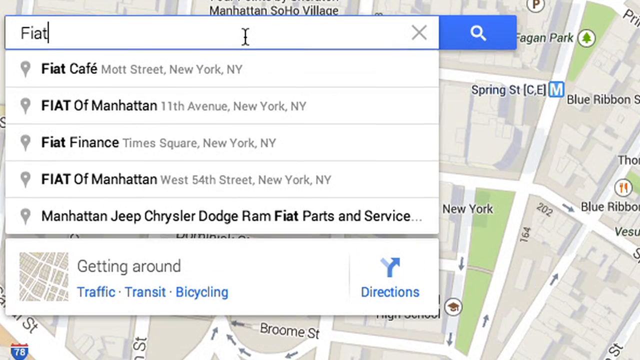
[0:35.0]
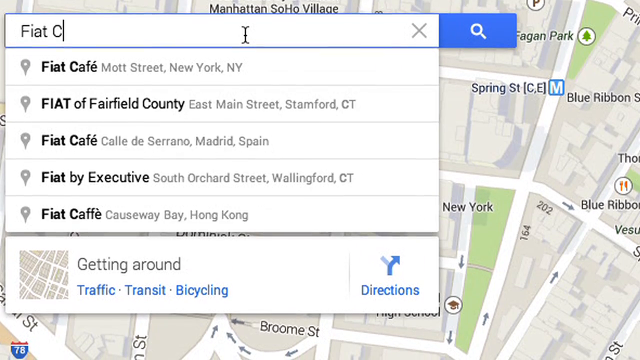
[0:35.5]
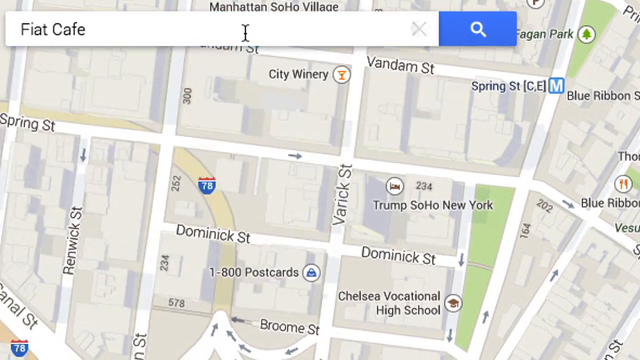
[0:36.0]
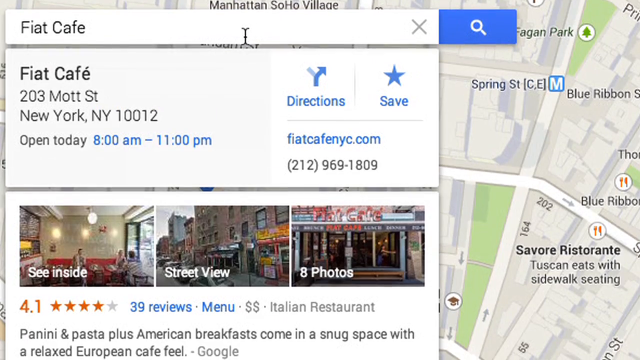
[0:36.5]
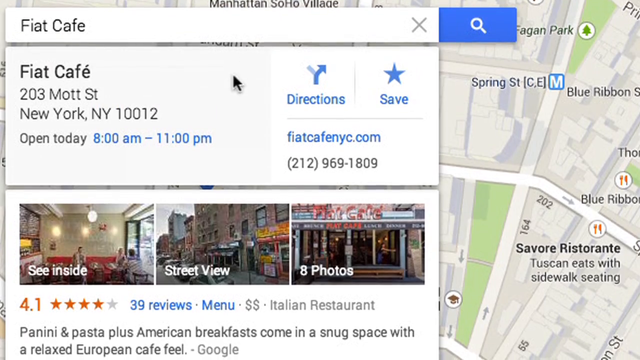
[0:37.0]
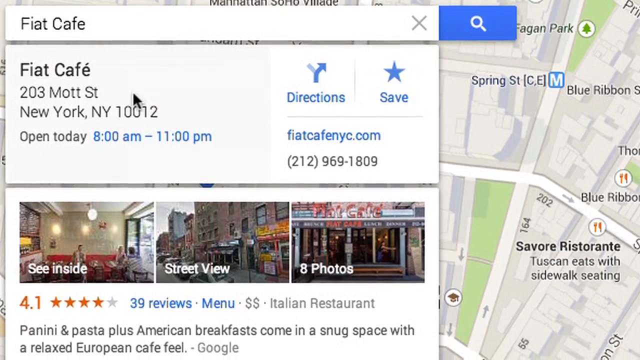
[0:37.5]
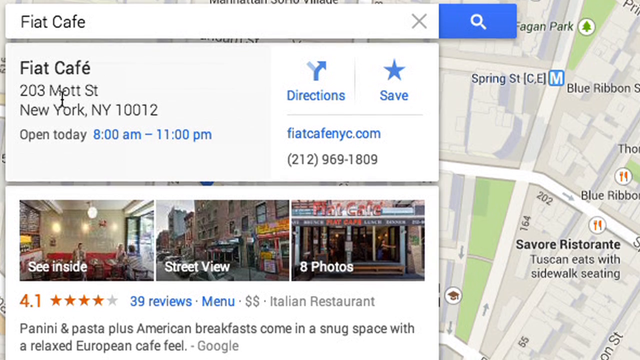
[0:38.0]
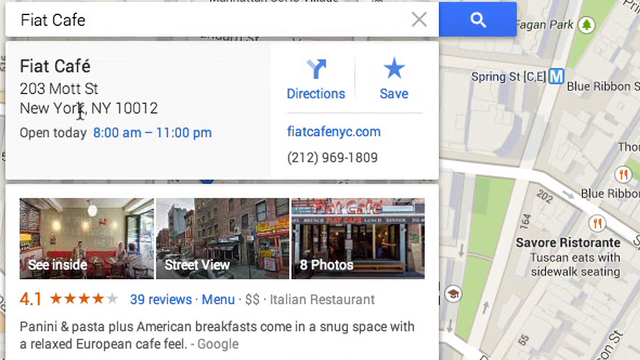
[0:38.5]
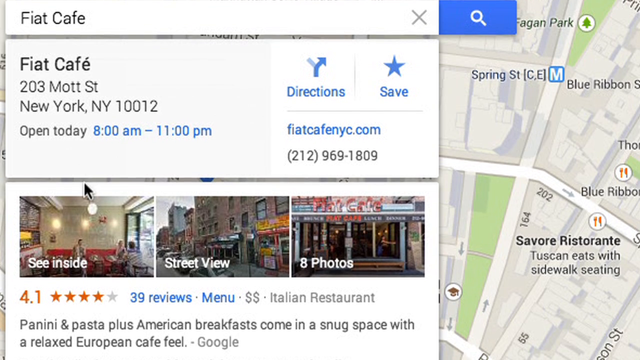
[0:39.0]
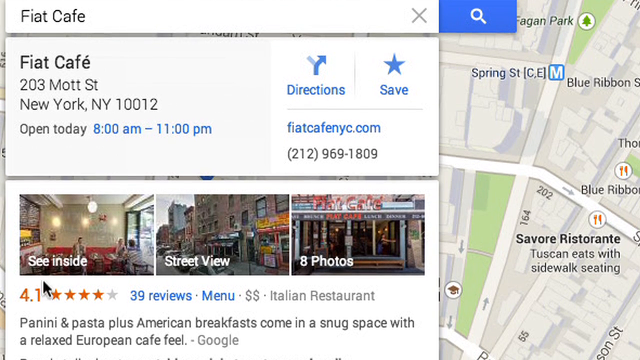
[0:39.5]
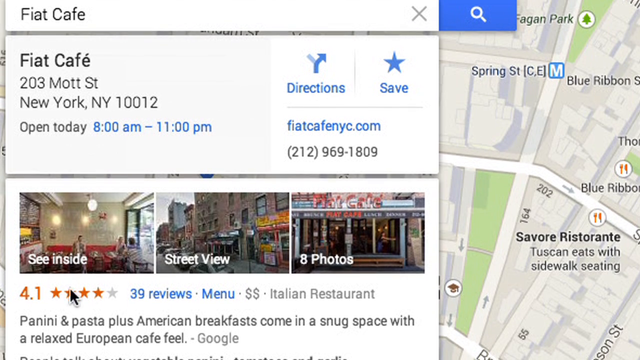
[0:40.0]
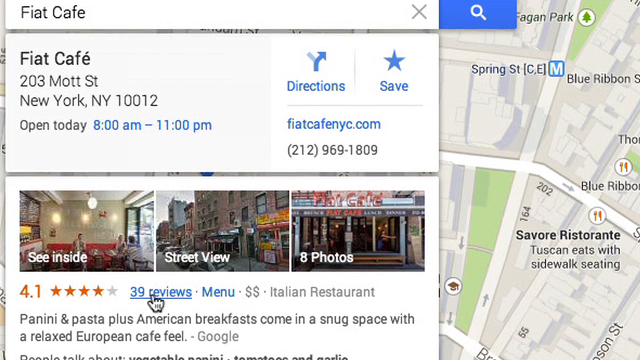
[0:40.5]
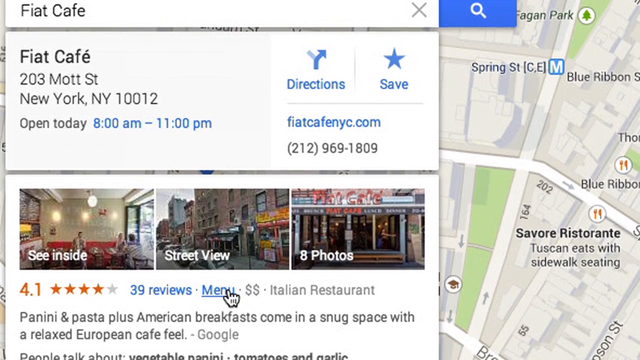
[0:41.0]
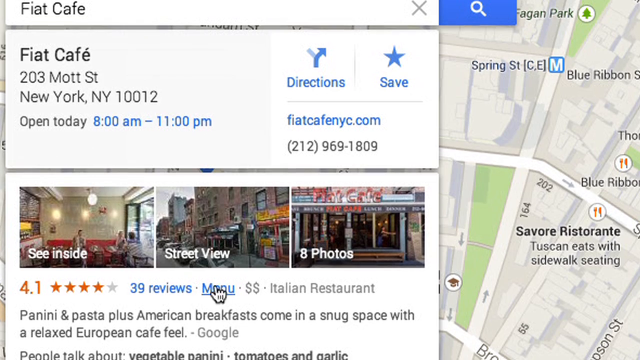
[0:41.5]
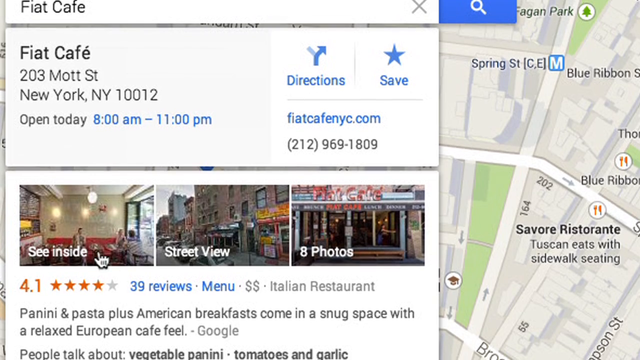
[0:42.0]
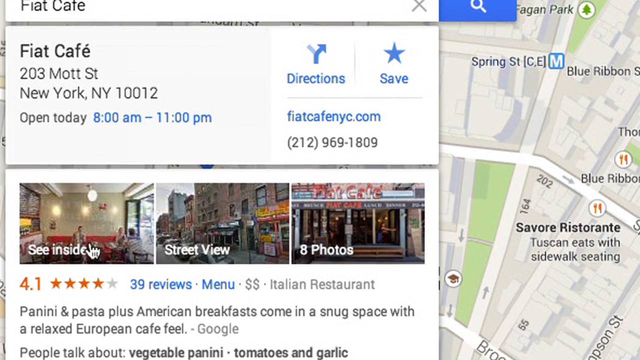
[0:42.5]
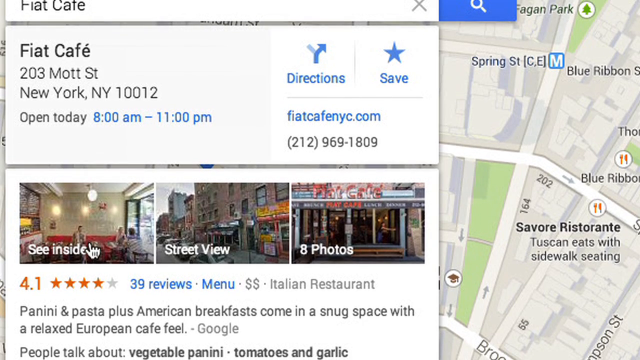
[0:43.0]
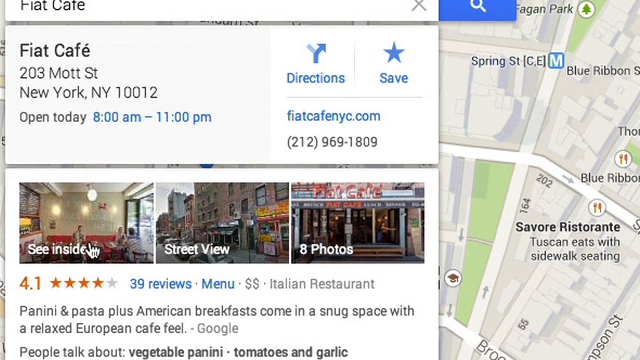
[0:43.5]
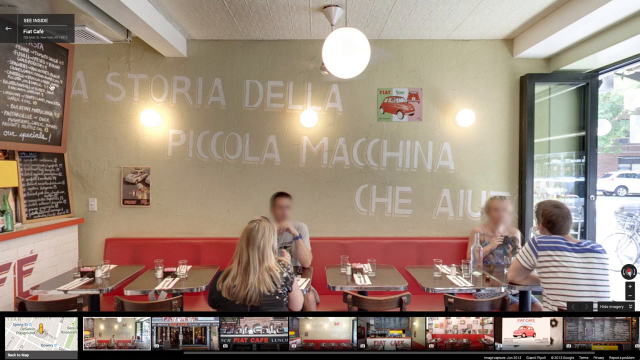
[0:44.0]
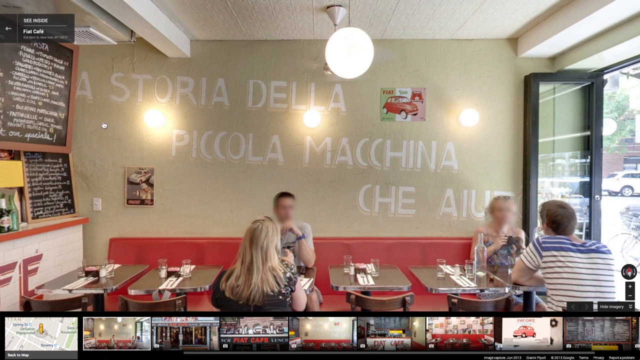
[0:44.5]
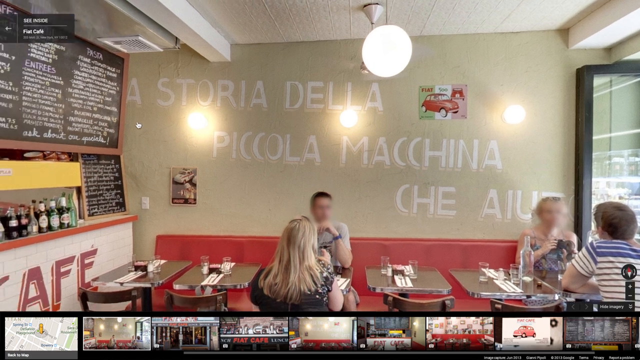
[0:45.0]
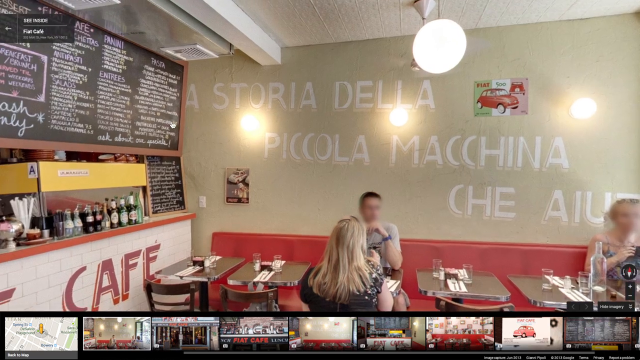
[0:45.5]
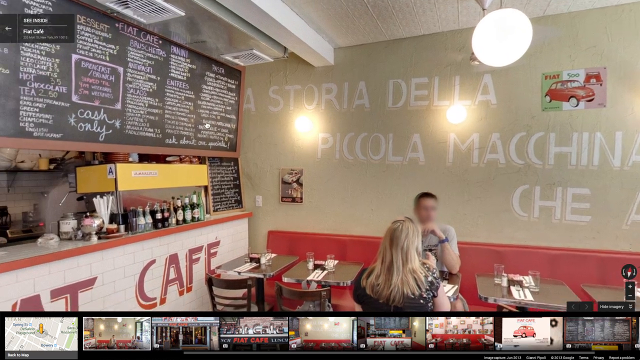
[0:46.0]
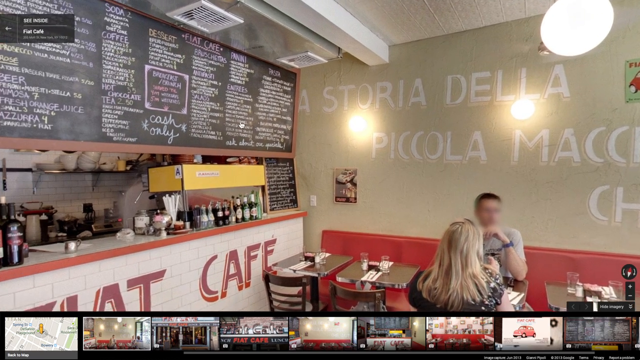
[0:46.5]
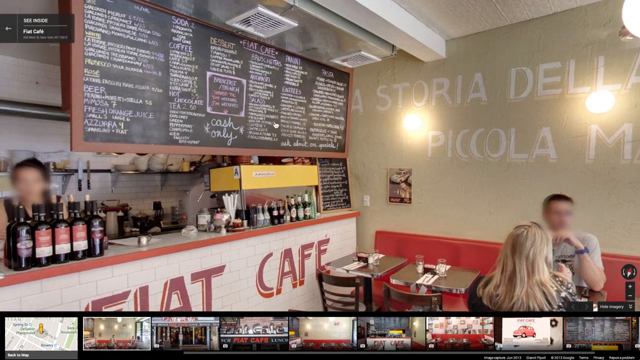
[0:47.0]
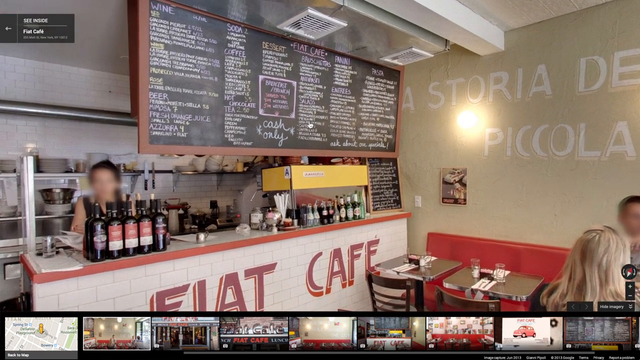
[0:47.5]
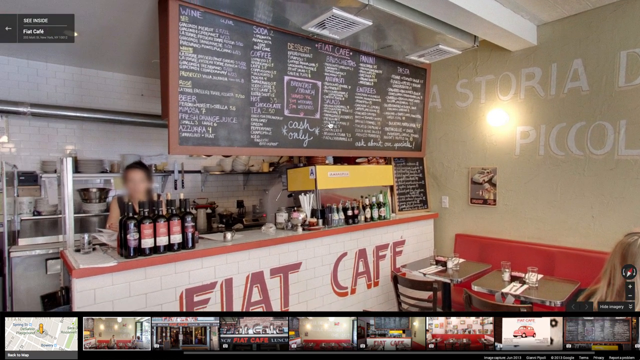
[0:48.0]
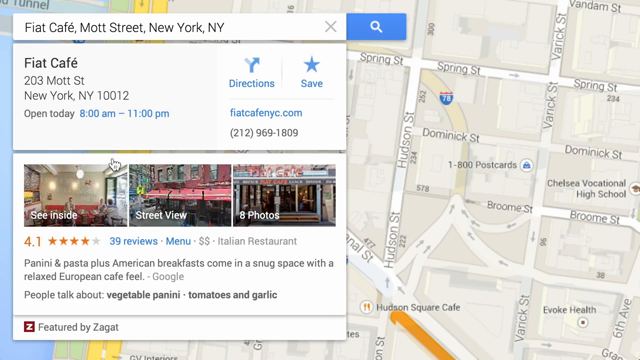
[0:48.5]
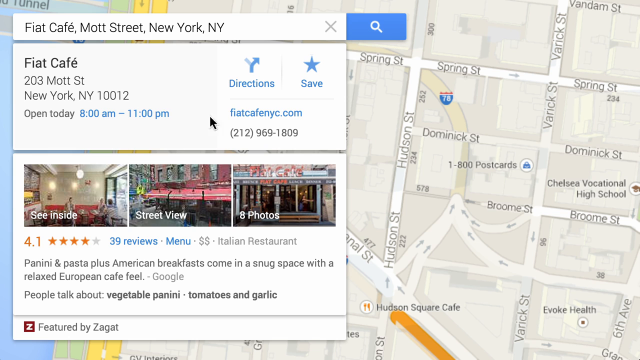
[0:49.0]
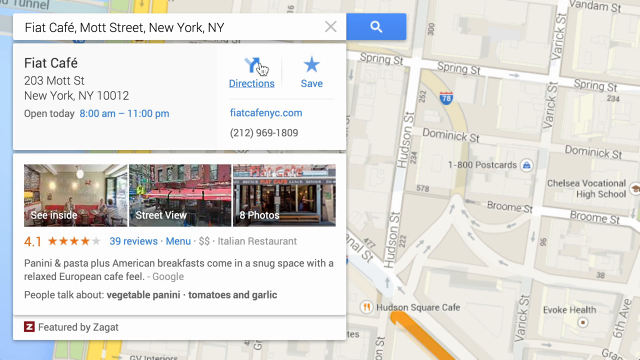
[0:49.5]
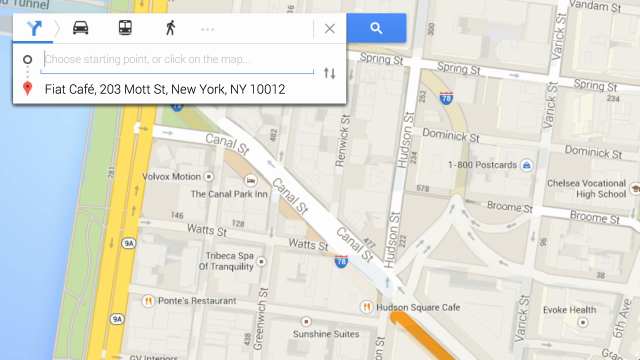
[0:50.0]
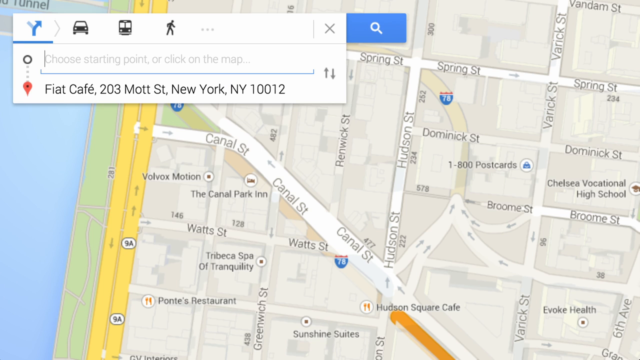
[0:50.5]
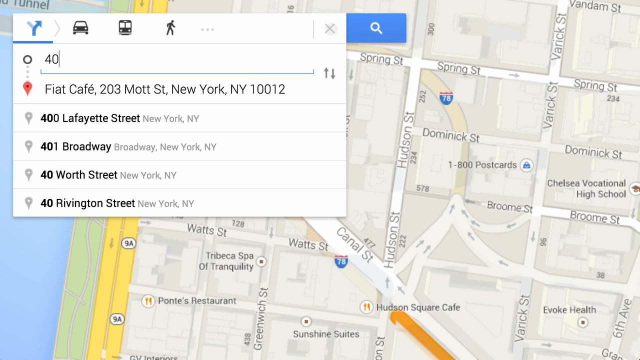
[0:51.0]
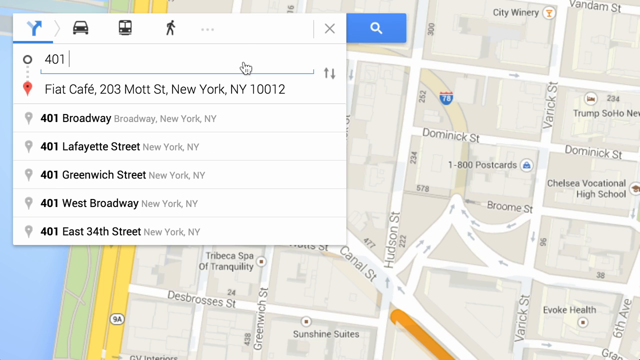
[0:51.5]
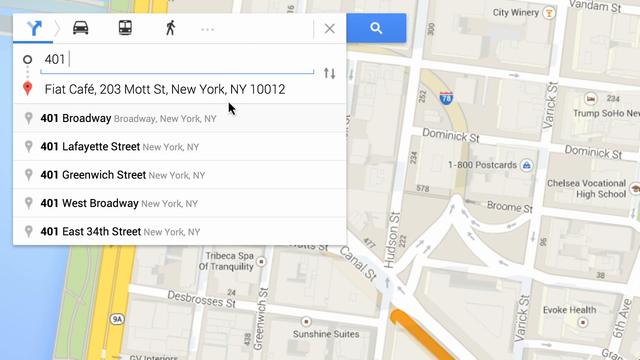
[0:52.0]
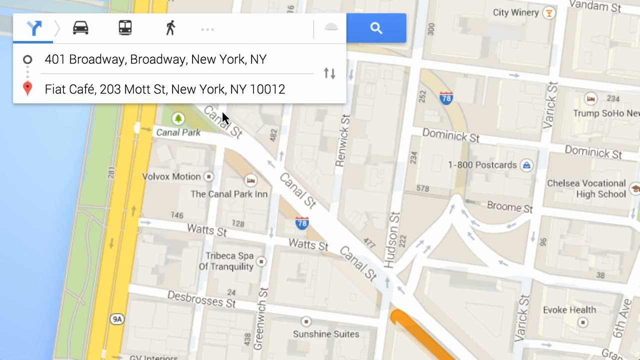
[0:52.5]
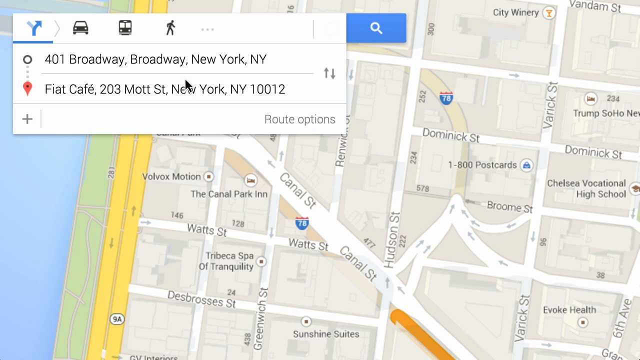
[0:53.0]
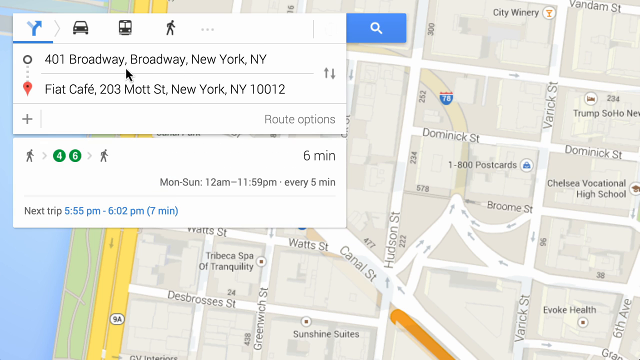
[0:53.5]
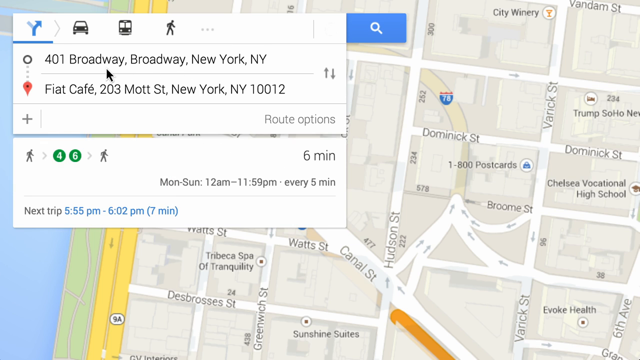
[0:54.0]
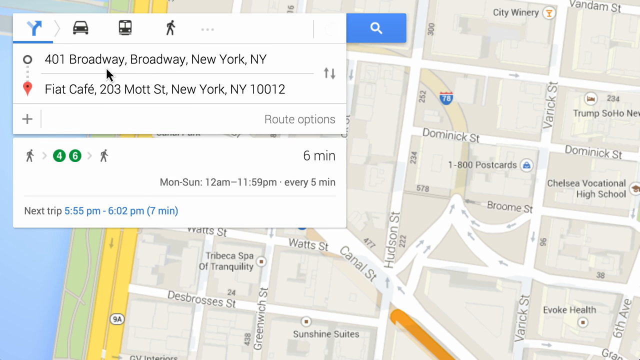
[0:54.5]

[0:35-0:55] A Google Maps listing for Fiat Cafe shows it located at 401 Broadway, New York, New York, open today 8 a.m. to 11 p.m., with 39 reviews on Google. It is an Italian restaurant with two dollar signs. The person types "Fiat Cafe" into the search menu, clicks on directions and types in 401 Broadway, New York, New York, and clicks "see inside," which leads to an inside shot of the cafe. Inside are people, including something like a barista, in sort of reddish, whitish colors. A large chalkboard has the menu written on it, and a few people sit in chairs, apparently having drinks.